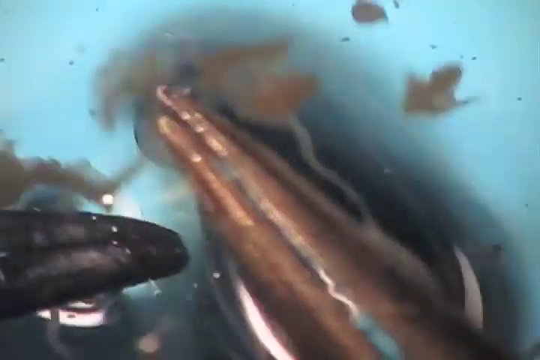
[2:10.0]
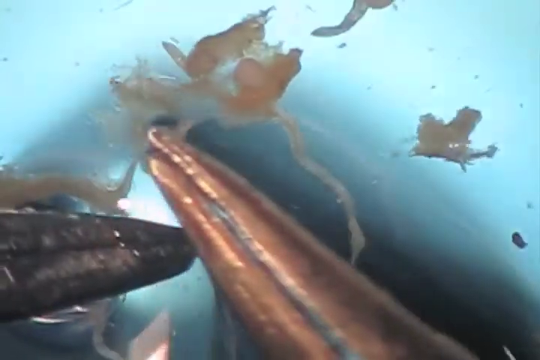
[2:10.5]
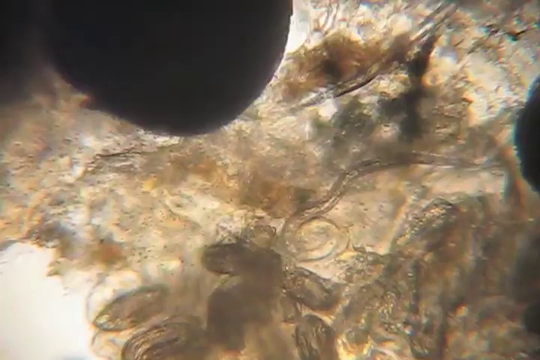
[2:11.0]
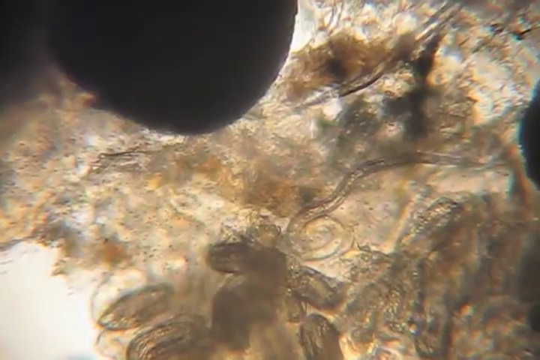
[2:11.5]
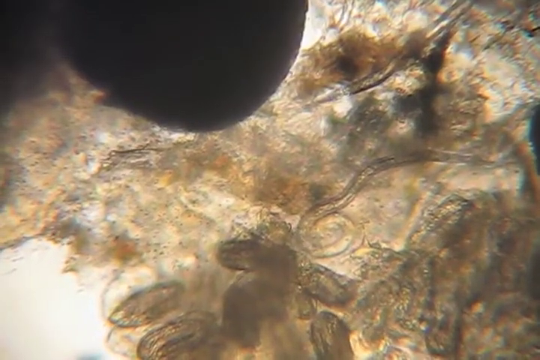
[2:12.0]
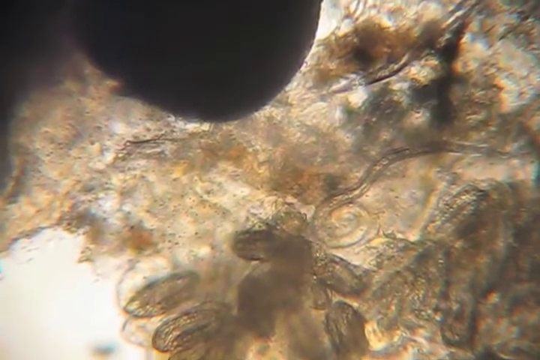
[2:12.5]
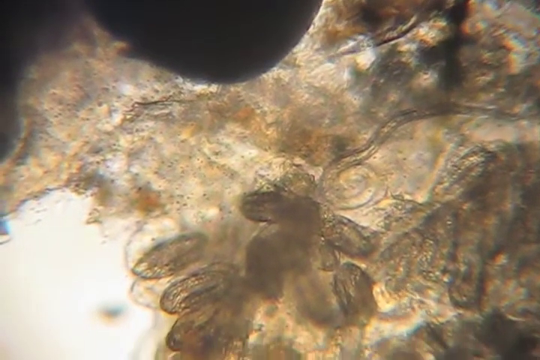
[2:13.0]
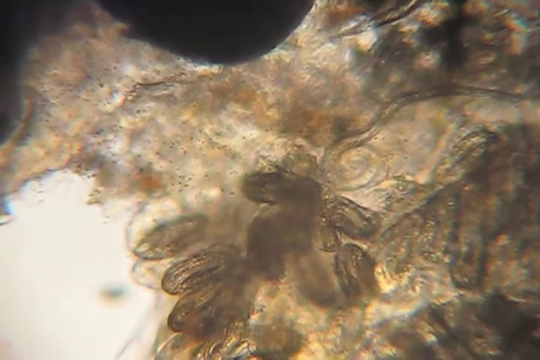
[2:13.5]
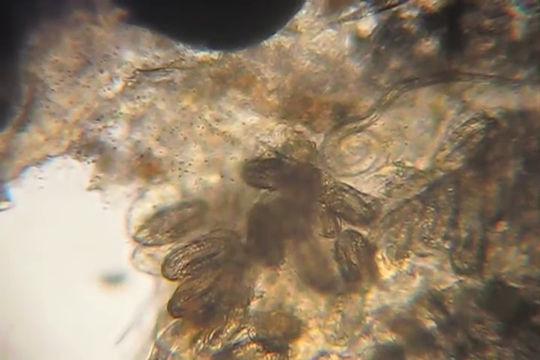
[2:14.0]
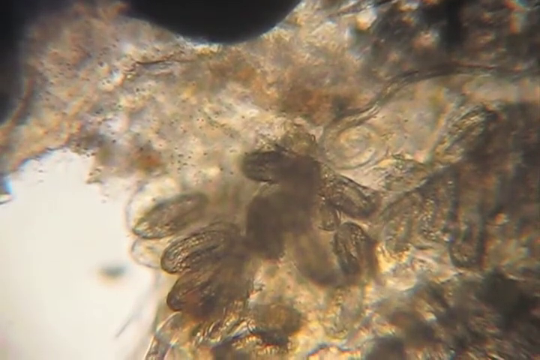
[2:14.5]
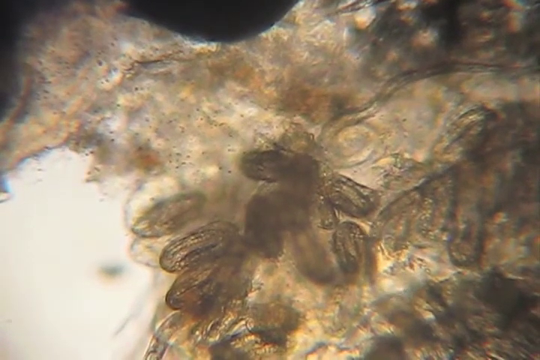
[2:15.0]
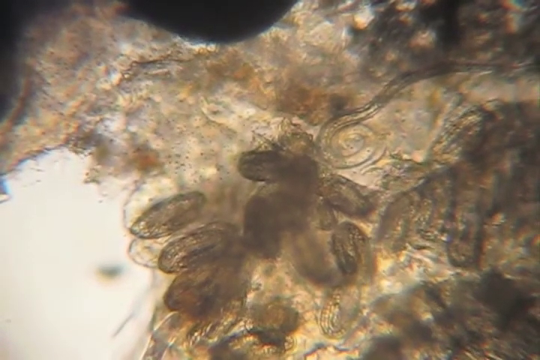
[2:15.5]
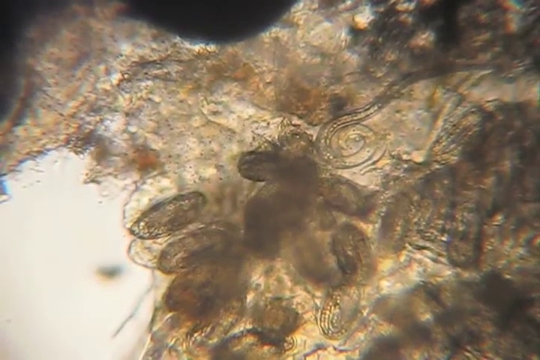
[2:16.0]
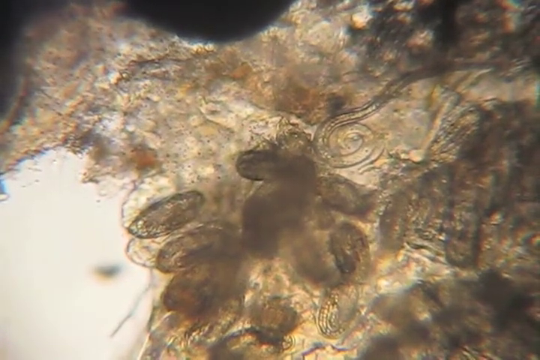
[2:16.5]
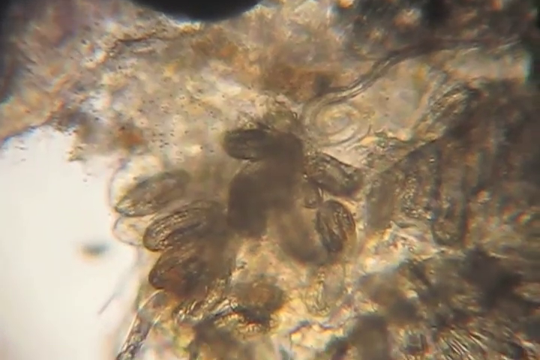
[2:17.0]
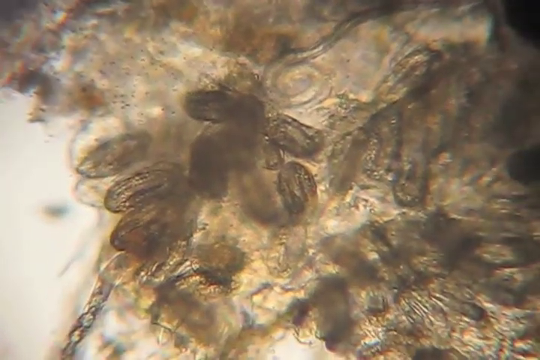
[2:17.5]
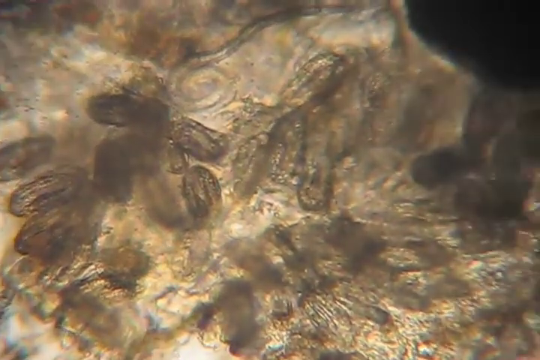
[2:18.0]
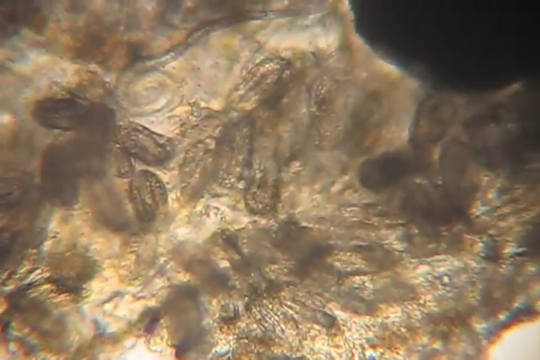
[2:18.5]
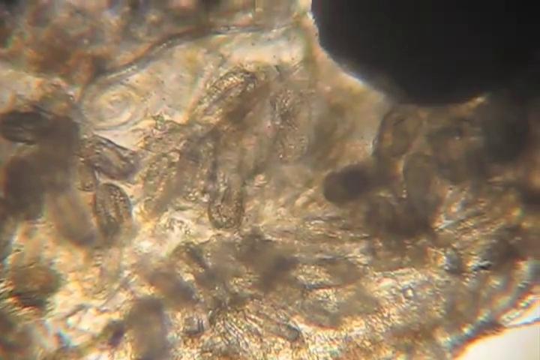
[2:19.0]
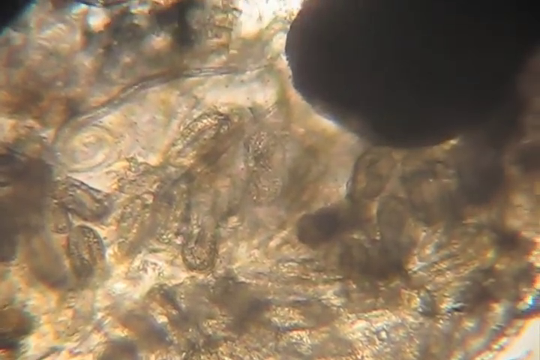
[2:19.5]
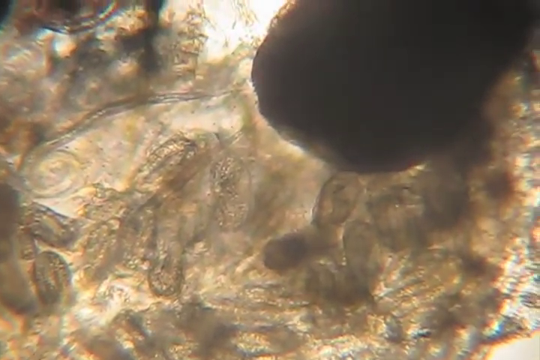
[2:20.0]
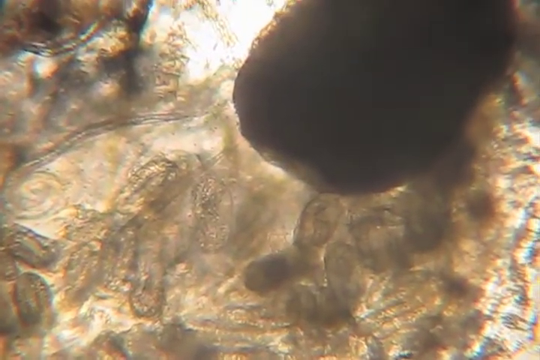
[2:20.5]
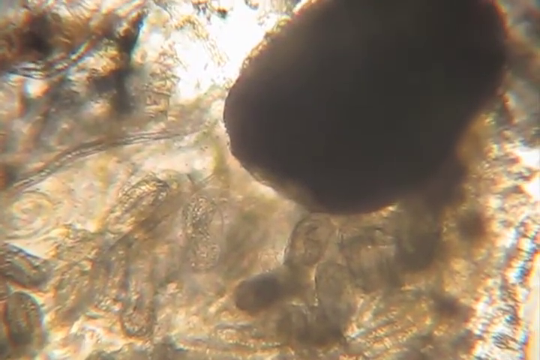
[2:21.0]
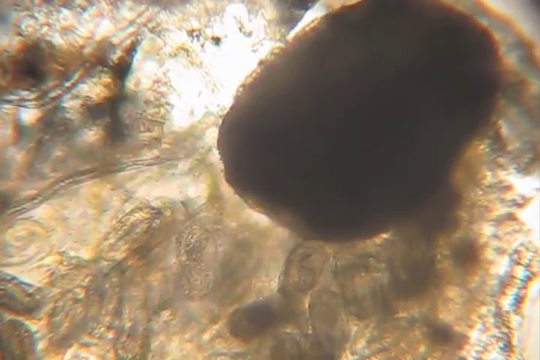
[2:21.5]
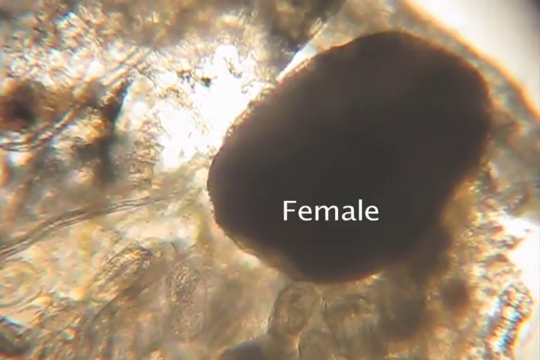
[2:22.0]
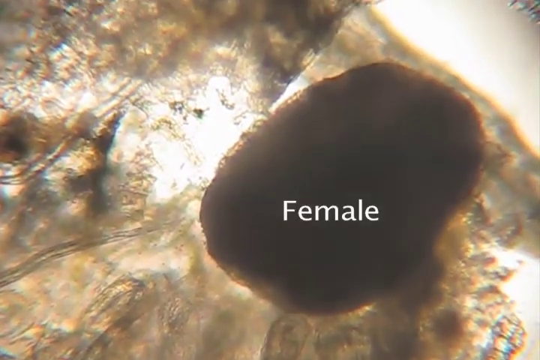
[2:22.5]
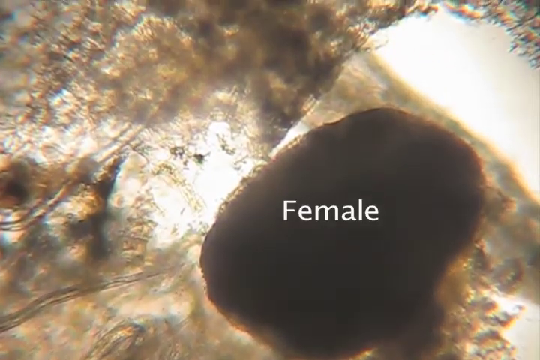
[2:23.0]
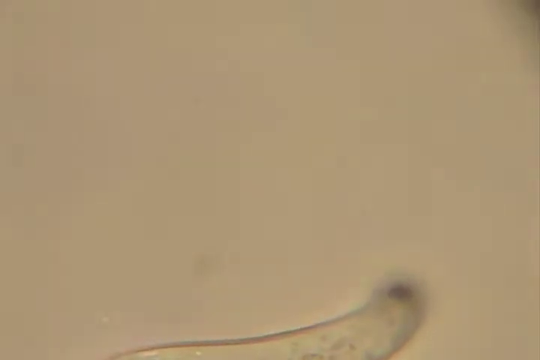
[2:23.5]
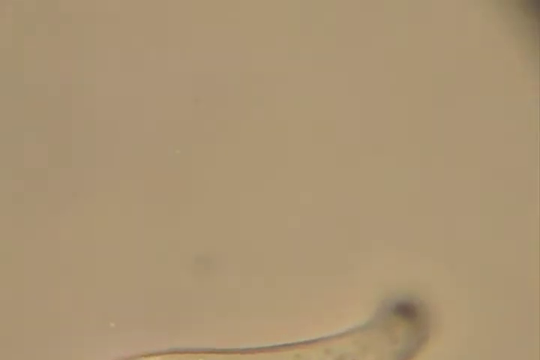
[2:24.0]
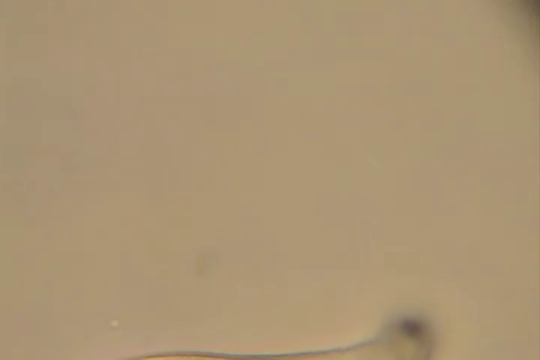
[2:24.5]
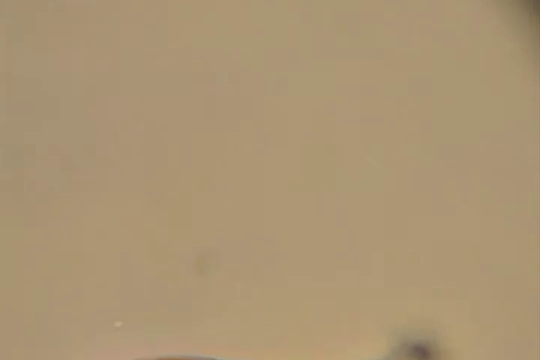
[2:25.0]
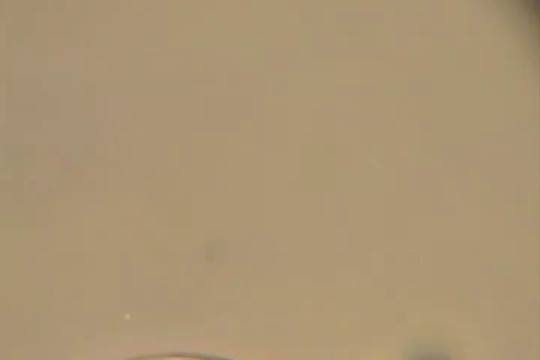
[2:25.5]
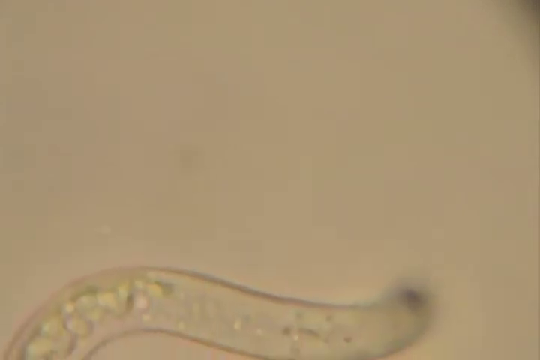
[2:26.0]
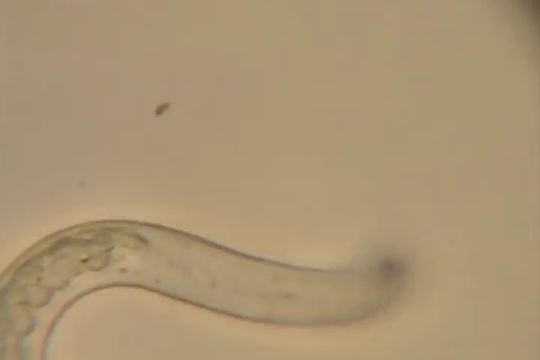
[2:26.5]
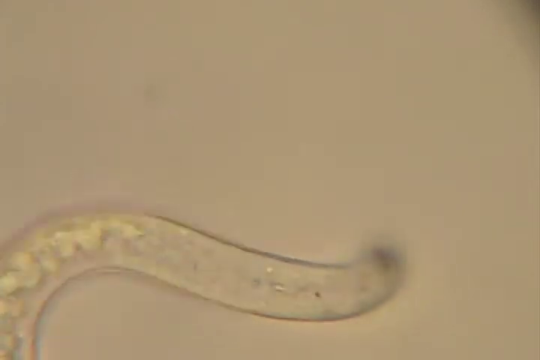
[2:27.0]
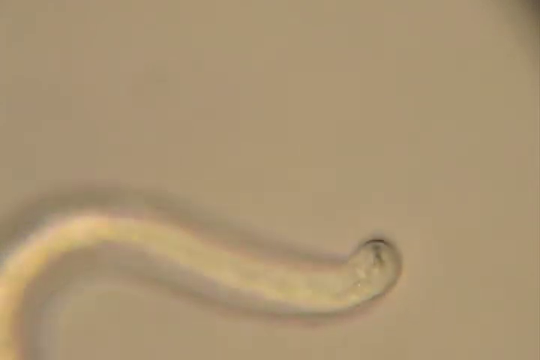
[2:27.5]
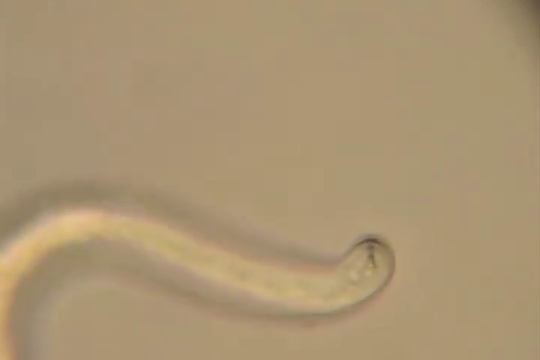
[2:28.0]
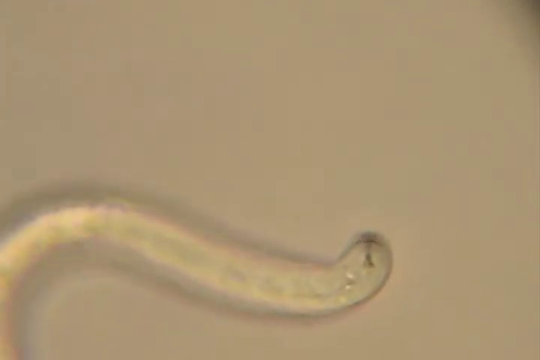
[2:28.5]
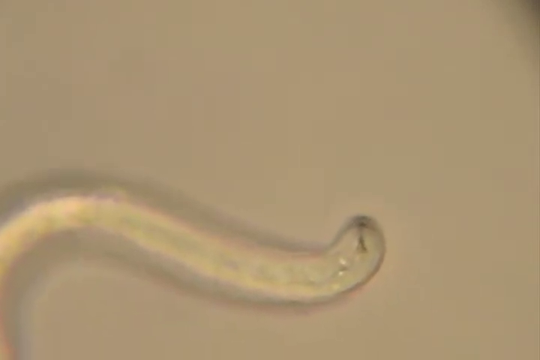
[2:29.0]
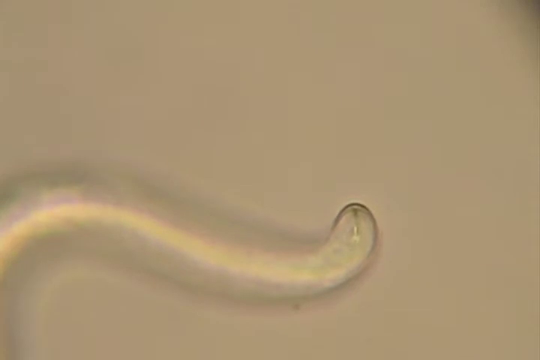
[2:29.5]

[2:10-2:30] The rest of the roots move around the plate in the microscope. The tweezer on the right seems to be a slightly different color than the one on the left, appearing more bronze. Next, a pressed piece of the root is shown inside a plate, revealing the inner workings of the roots and the large masses the roots come out of. Some of the long root structures inside the plate are moving, and the roots seem to curl up at their ends. Large oval-shaped gray cells are inside the sample. A bright light shines behind it. White text appears on the screen reading "female".